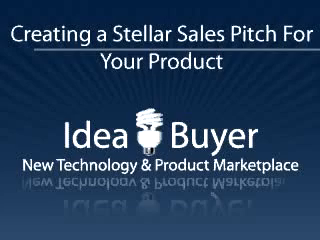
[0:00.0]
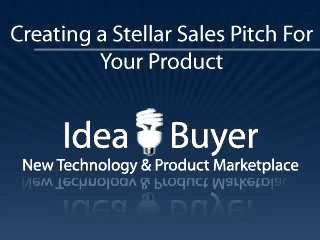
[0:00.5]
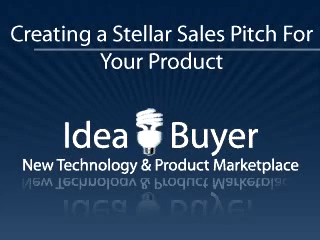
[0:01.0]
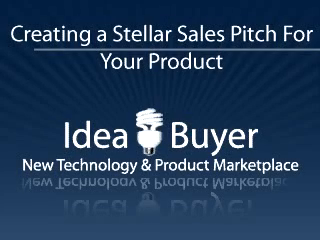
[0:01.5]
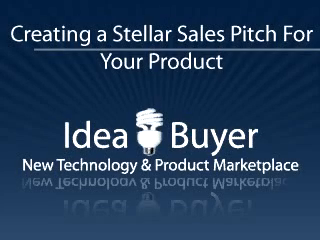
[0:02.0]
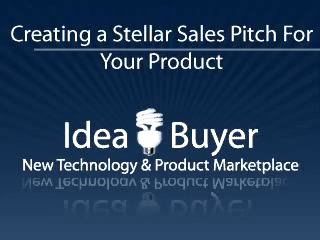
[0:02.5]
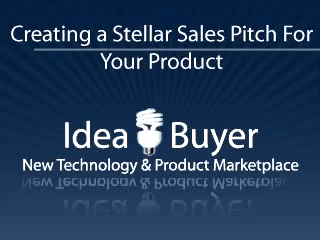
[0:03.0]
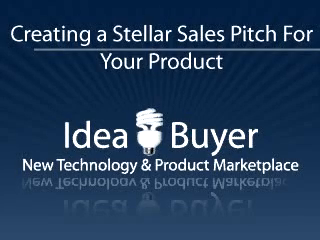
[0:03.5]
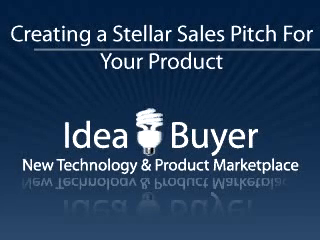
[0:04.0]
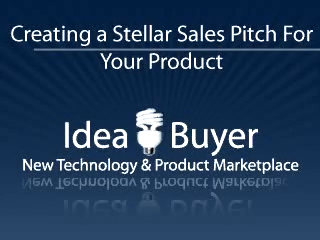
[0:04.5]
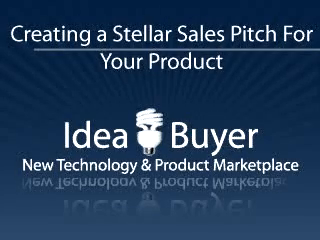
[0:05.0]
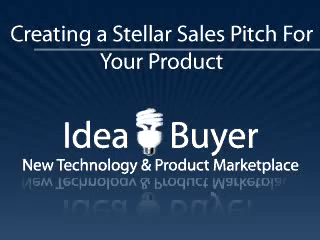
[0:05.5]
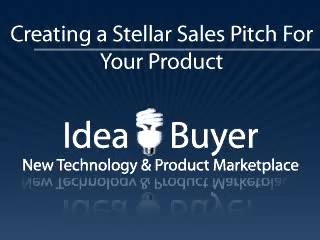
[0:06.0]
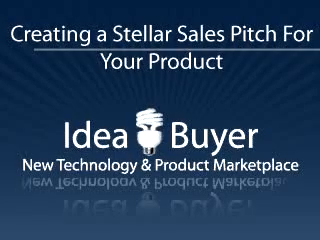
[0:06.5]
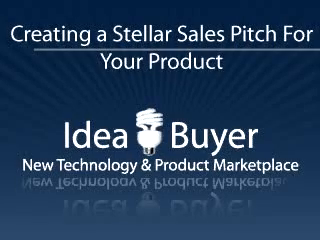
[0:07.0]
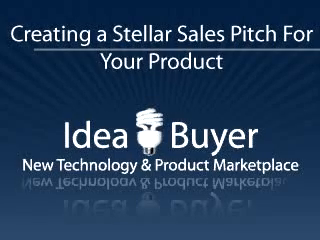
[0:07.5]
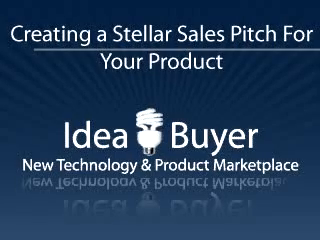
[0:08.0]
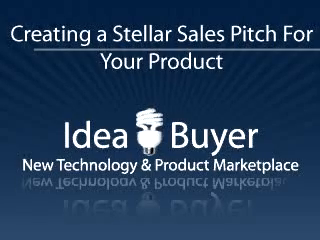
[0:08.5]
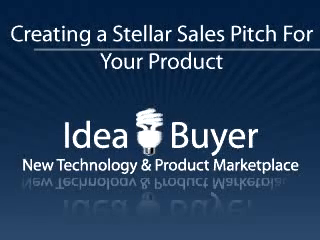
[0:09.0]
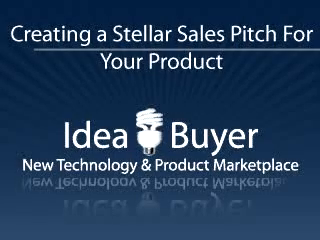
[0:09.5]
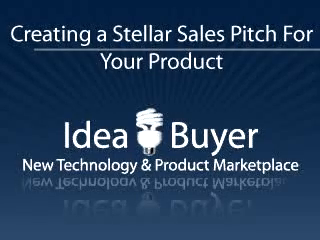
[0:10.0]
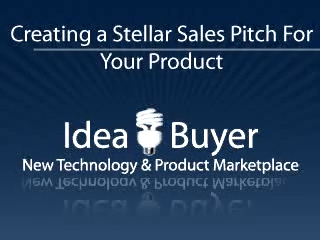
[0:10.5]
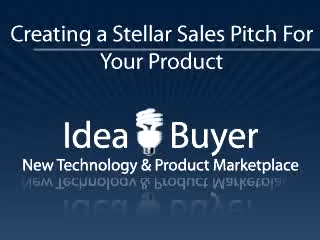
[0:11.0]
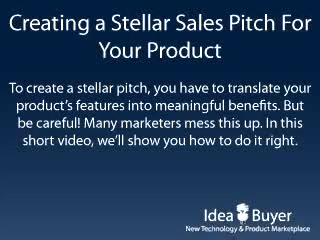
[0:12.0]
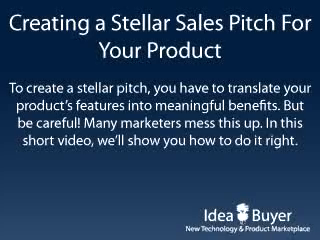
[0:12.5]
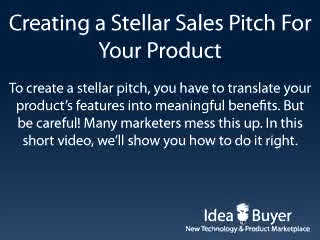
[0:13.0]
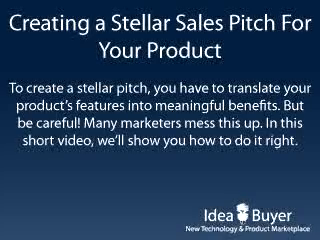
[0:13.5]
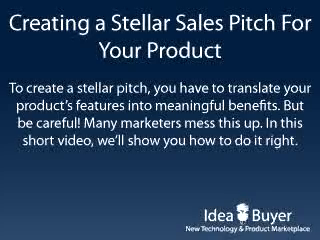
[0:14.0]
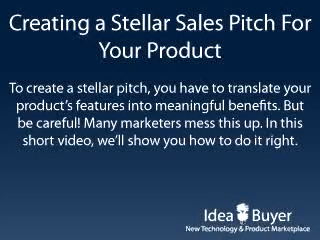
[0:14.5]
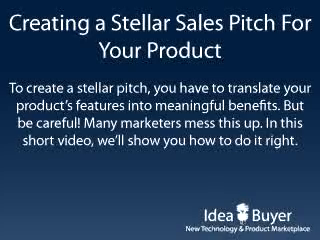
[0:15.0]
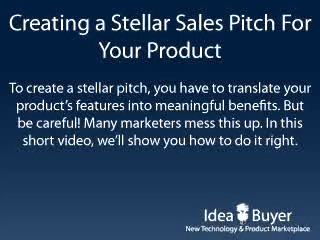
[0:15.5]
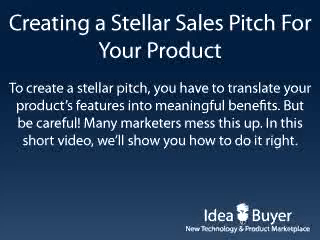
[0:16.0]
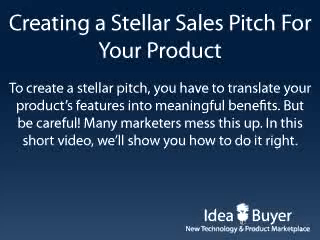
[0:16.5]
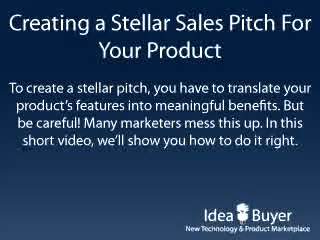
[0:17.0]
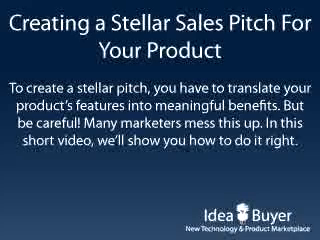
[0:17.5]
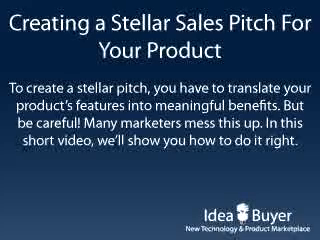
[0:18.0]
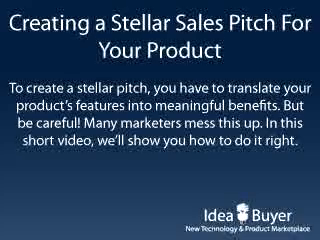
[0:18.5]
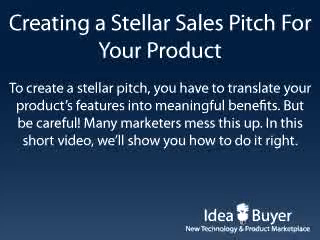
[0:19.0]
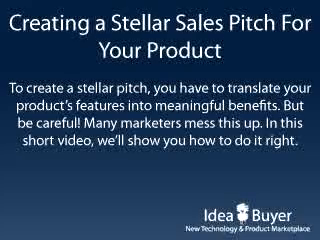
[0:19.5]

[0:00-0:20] On a blue screen, text reads "creating a stellar sales pitch for your product." The words "idea buyer" appear with a fluorescent light bulb, along with "new technology and product marketplace," which has a mirror image of itself directly underneath, as if reflected on water. The text moves forward quickly. Further text says "stellar pitch, you have to translate your product features as meaningful benefits, but be careful many marketers mess this up" and "we'll show you how to do it right." "Idea buyer" appears at the bottom of the screen.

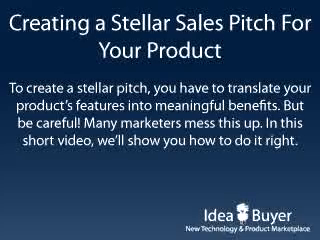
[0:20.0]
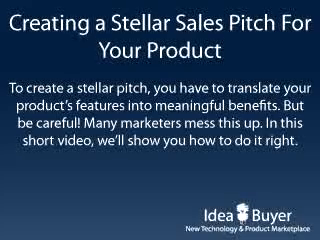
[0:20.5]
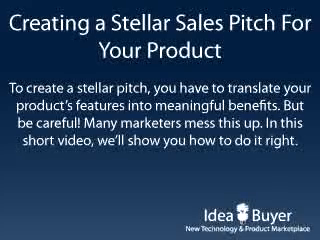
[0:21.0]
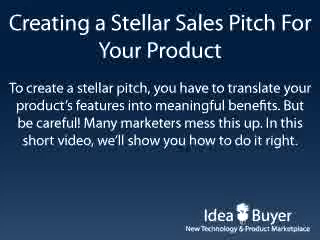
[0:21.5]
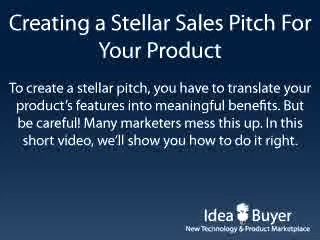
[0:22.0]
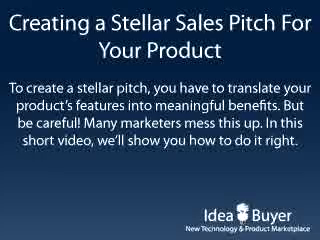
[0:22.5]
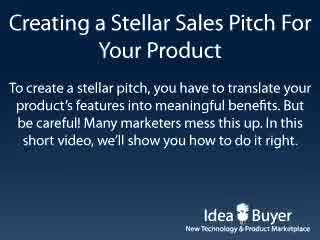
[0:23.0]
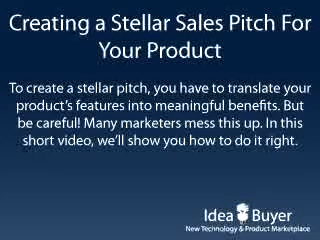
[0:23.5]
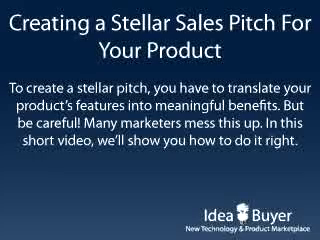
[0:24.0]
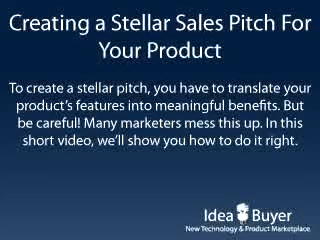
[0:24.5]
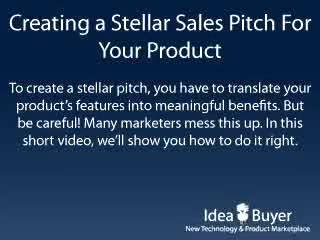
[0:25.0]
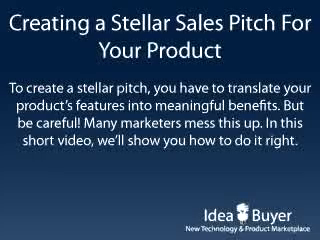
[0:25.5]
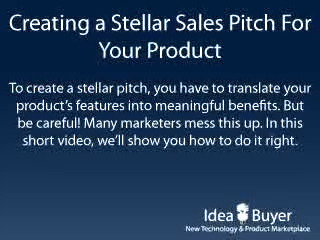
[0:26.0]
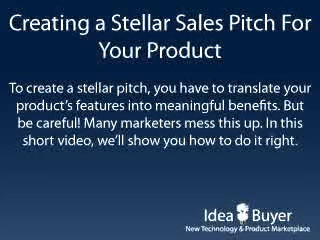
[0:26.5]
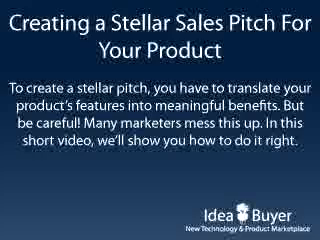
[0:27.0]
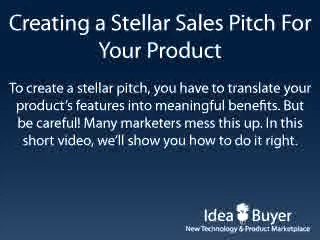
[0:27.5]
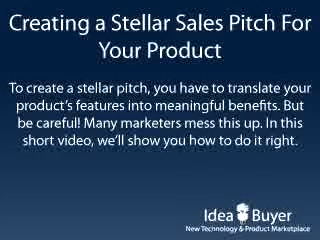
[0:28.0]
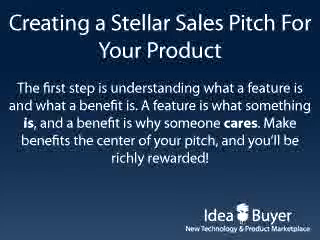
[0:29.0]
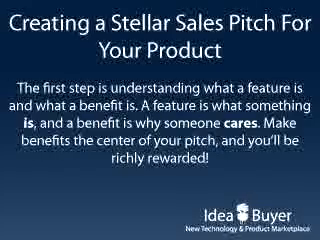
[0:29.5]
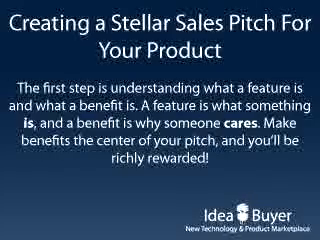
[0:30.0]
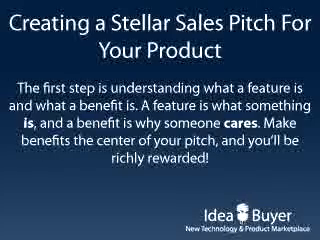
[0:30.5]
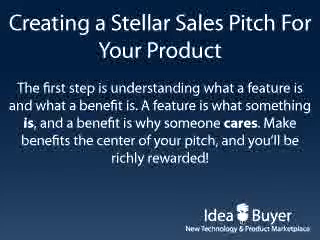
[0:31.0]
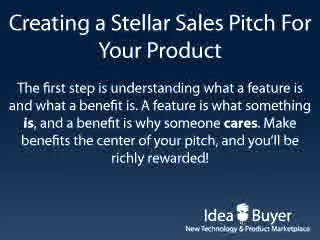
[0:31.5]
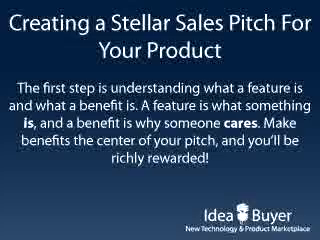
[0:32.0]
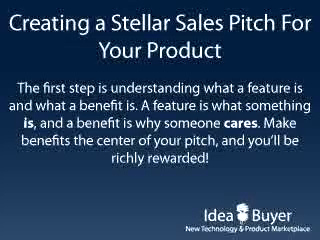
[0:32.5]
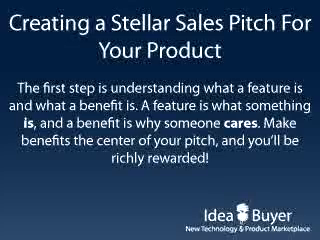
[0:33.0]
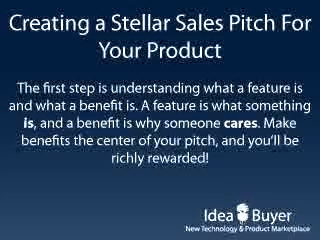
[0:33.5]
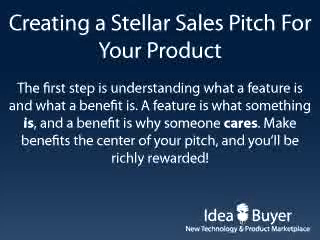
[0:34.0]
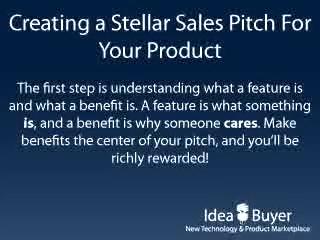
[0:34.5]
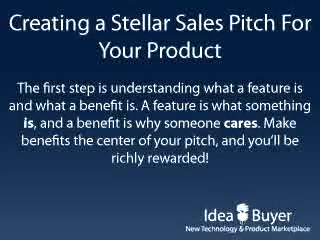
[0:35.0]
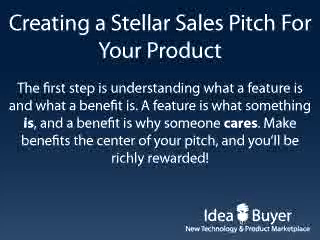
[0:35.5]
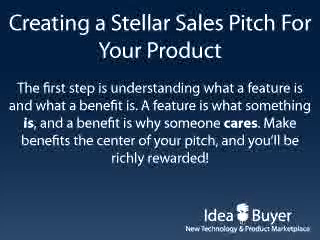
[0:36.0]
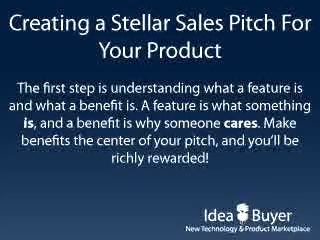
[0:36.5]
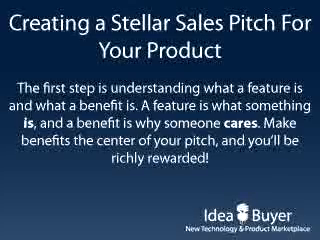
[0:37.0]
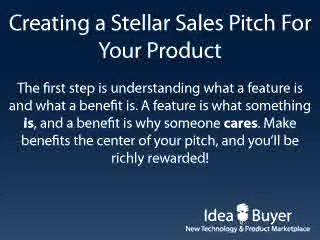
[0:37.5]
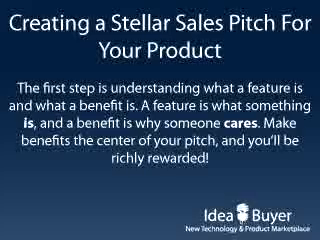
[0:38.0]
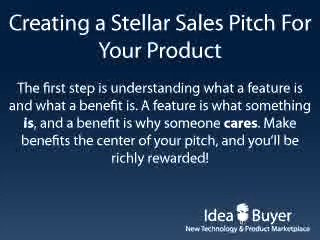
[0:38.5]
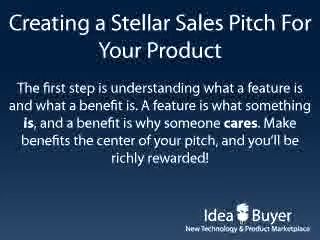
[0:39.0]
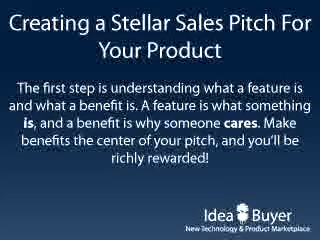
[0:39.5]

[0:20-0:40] The blue screen with white lettering continues the topic of creating a stellar sales pitch for your product. The first step reads "understand what a feature is and what a benefit is," followed by "a feature is what something is and the benefit is why someone cares" and "make benefits the center of your pitch." The text about translating product features into meaningful benefits and the warning that many marketers mess up repeats. It is all words, moving quickly from one point to another.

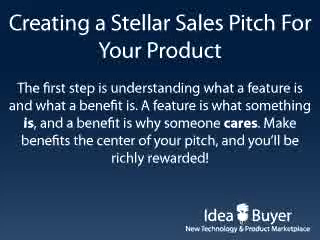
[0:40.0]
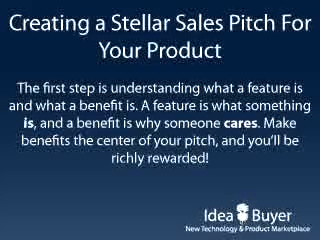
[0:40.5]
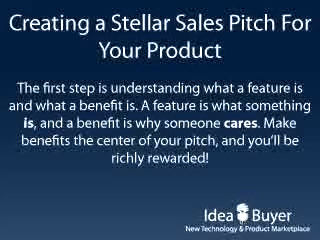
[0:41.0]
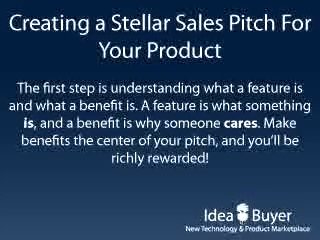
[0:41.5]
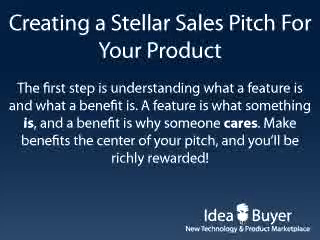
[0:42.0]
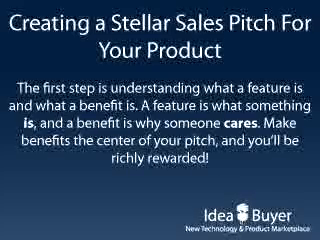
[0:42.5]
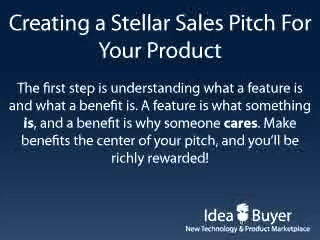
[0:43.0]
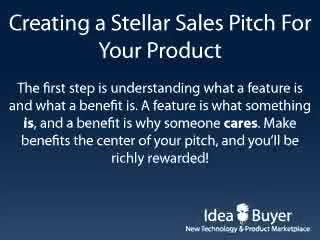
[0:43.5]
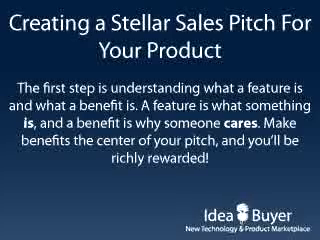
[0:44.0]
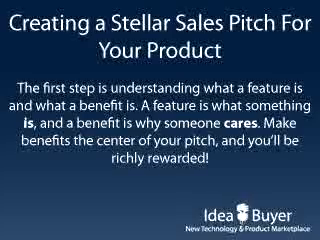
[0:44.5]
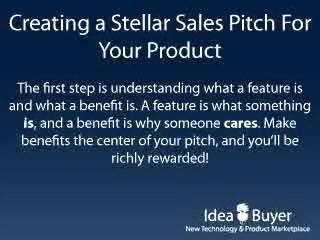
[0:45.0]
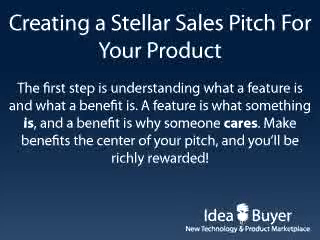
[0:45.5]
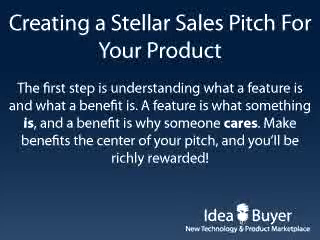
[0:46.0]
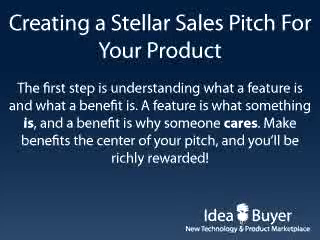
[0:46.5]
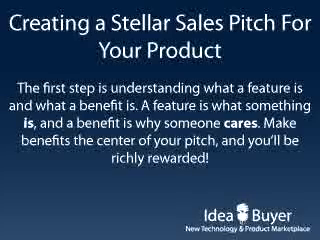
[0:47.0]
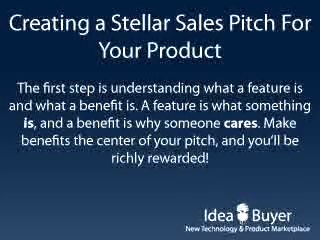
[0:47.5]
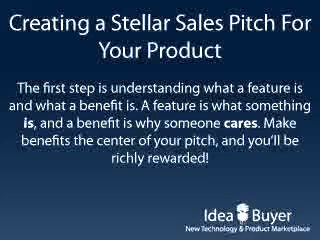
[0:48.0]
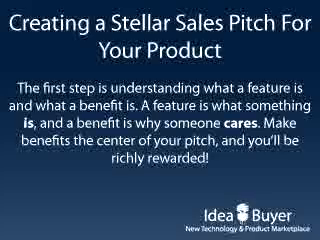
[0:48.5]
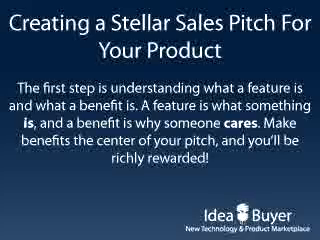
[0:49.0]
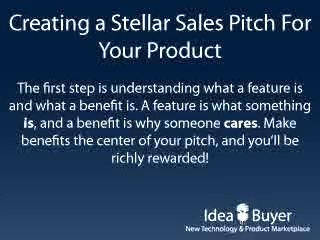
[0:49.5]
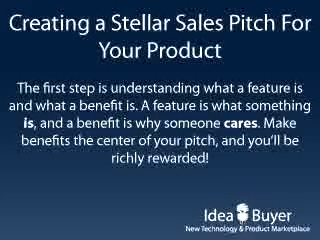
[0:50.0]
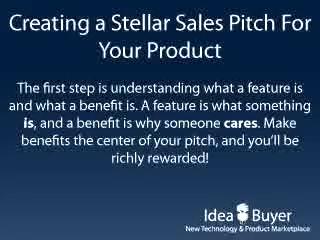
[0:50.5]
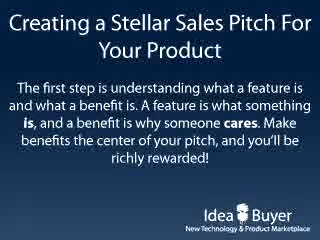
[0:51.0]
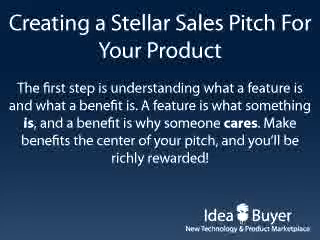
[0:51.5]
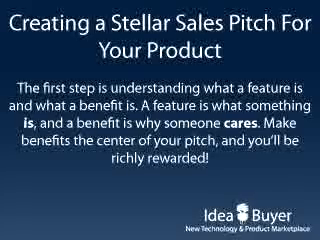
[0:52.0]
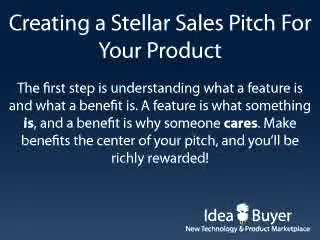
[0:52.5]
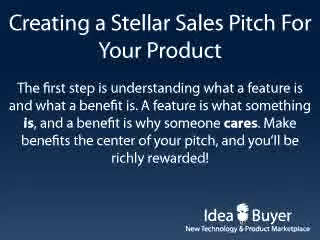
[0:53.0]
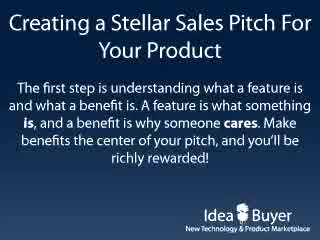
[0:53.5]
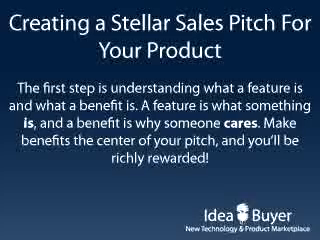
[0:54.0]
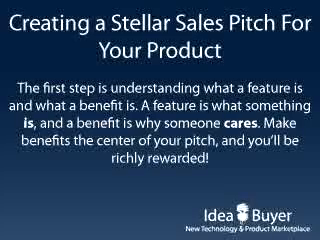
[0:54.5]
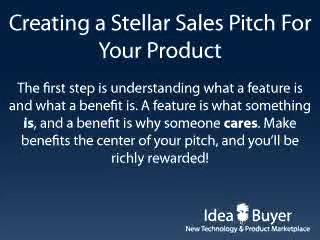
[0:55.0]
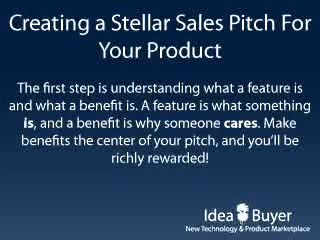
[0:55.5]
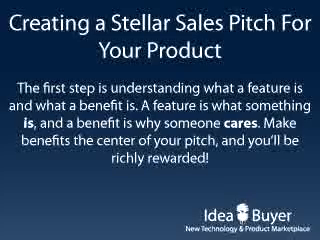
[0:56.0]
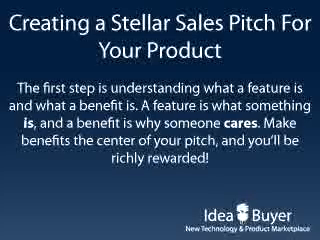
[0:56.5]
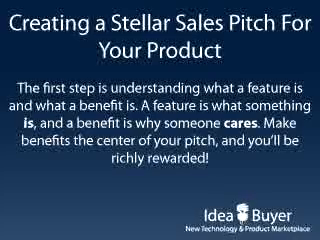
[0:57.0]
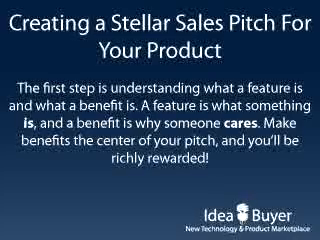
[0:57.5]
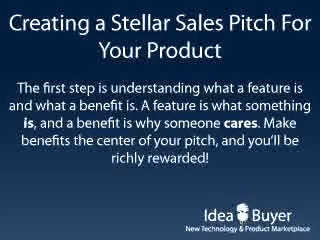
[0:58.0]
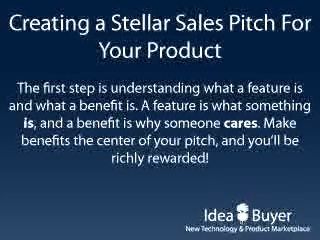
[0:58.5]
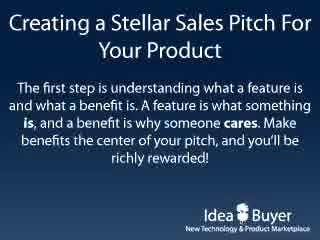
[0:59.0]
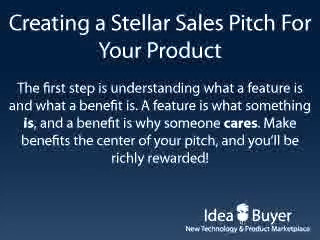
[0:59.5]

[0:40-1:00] The blue screen with white text stays on the first step, "understand what a feature is and what a benefit is," with "a feature is what something is and a benefit why someone cares." There is no movement; the text and setting do not change.